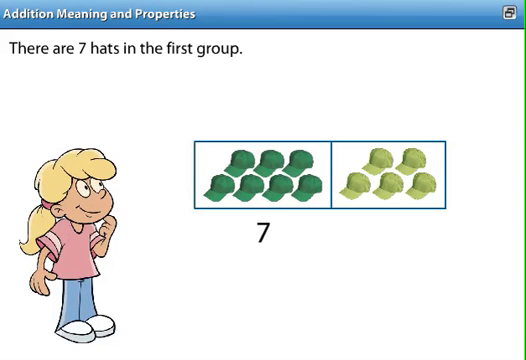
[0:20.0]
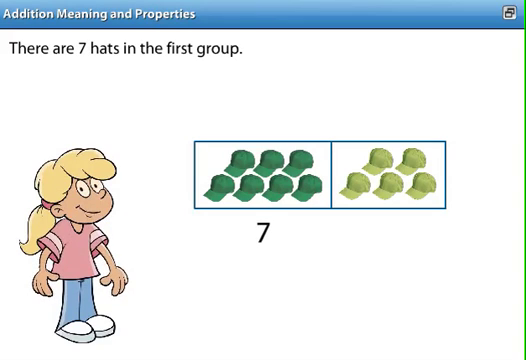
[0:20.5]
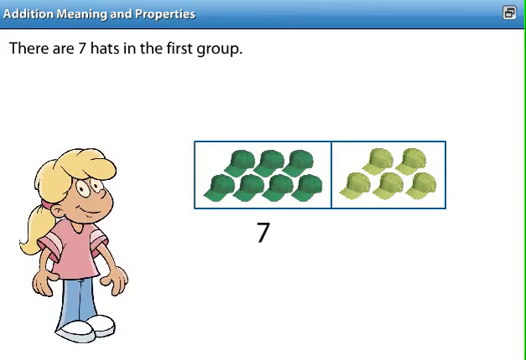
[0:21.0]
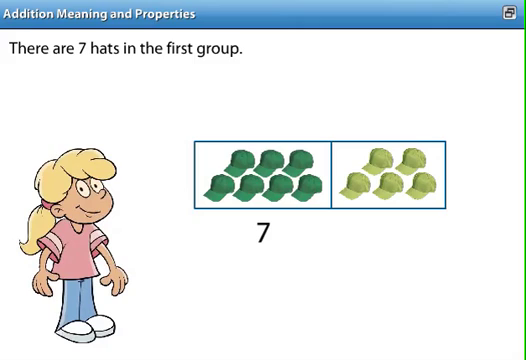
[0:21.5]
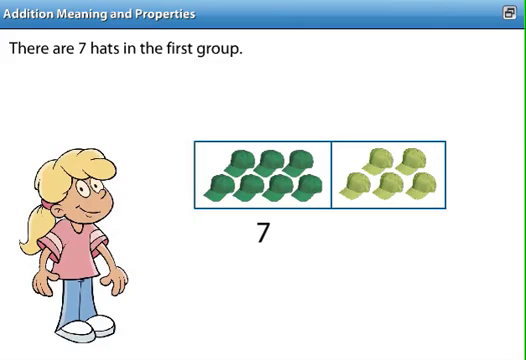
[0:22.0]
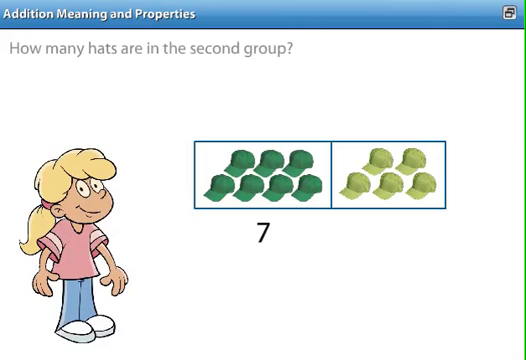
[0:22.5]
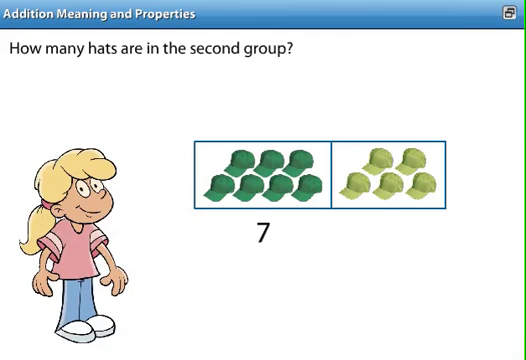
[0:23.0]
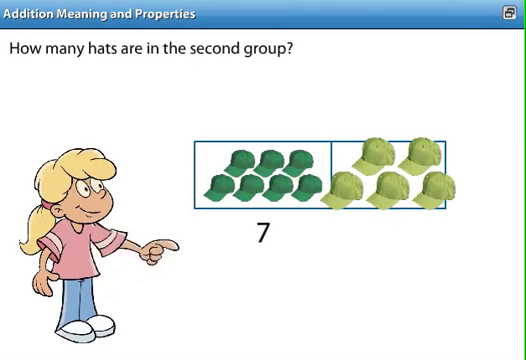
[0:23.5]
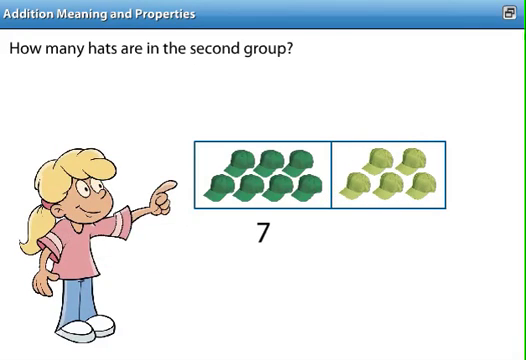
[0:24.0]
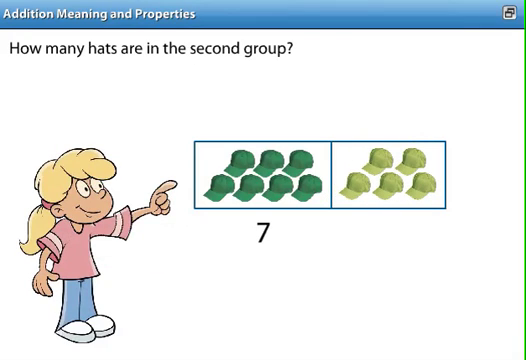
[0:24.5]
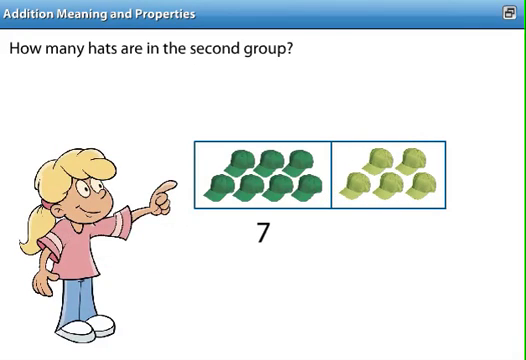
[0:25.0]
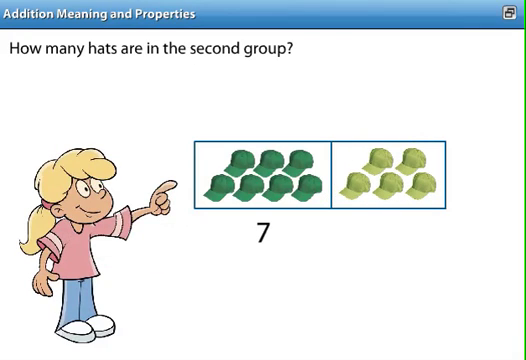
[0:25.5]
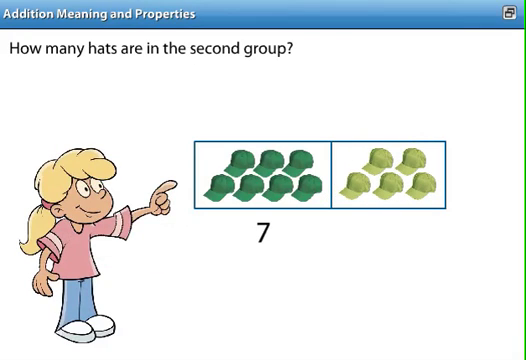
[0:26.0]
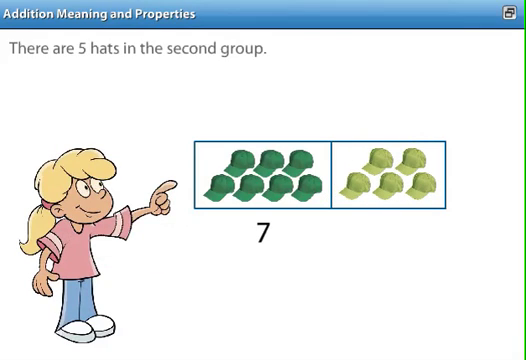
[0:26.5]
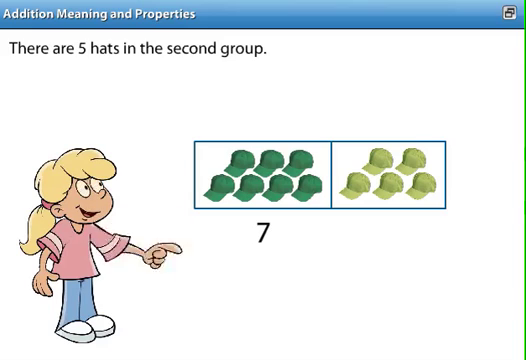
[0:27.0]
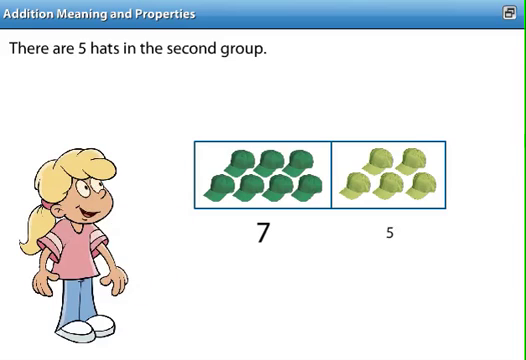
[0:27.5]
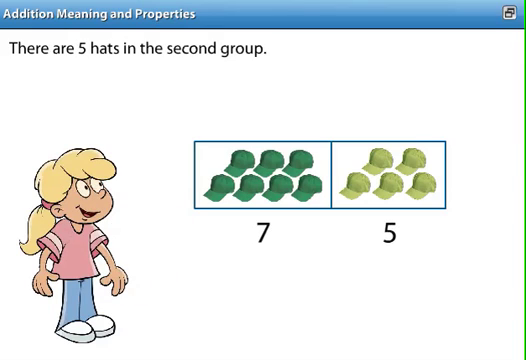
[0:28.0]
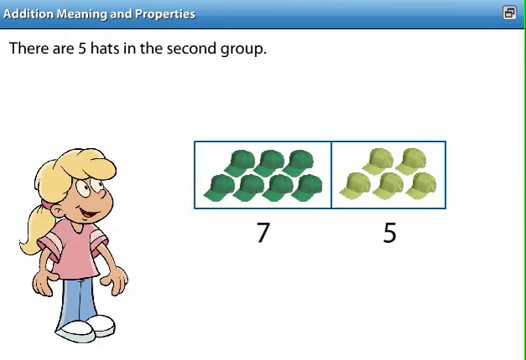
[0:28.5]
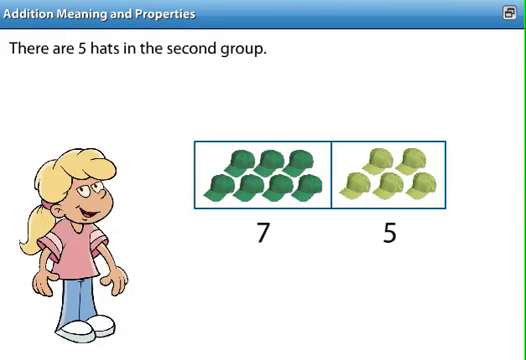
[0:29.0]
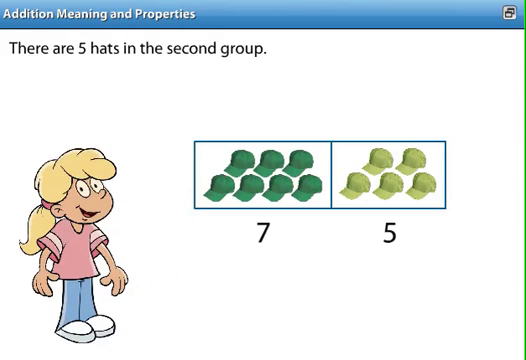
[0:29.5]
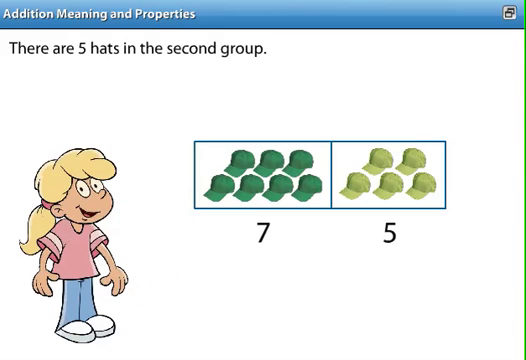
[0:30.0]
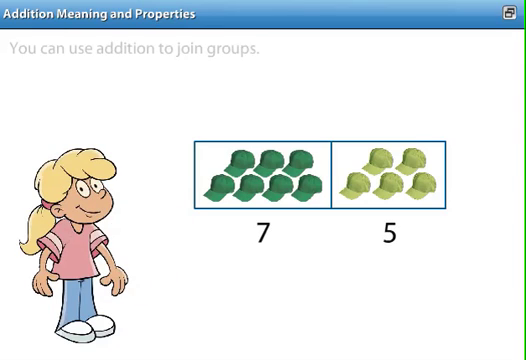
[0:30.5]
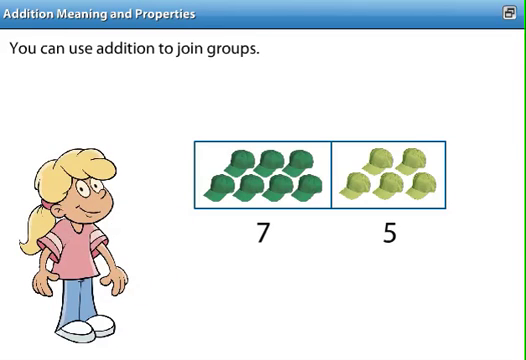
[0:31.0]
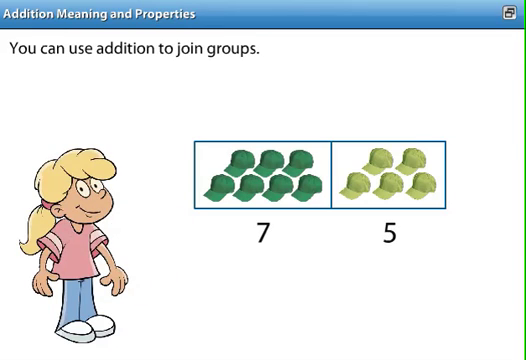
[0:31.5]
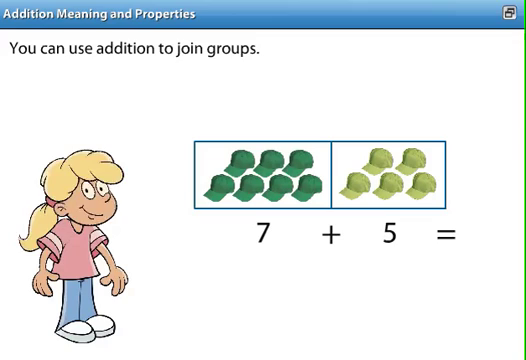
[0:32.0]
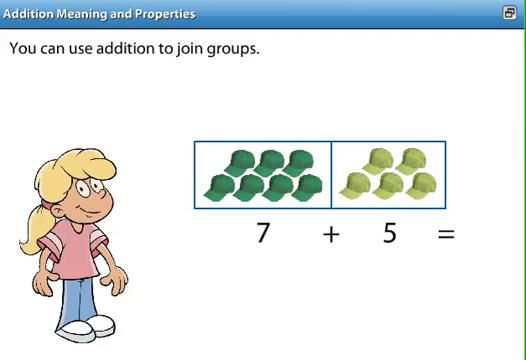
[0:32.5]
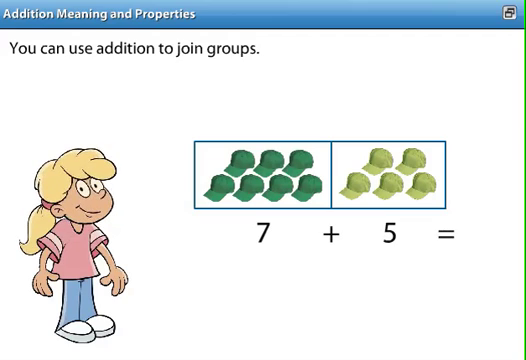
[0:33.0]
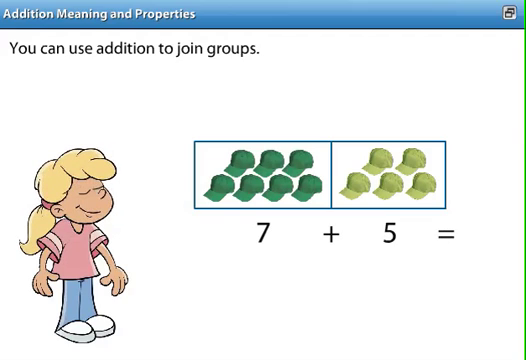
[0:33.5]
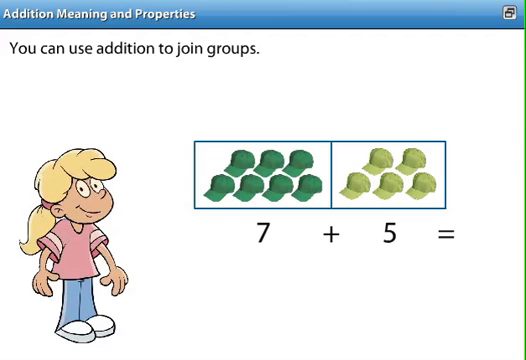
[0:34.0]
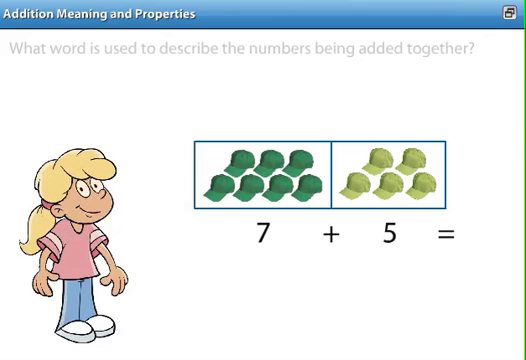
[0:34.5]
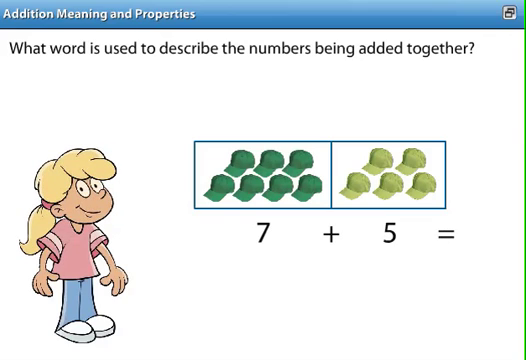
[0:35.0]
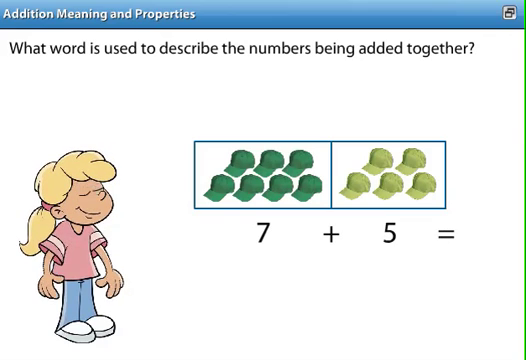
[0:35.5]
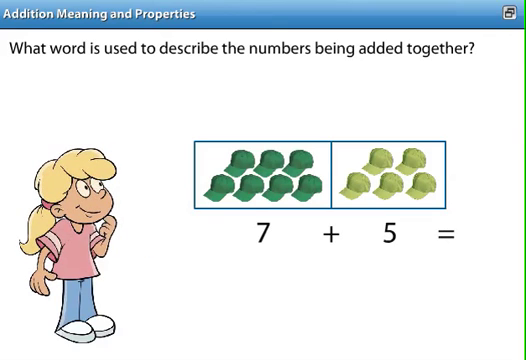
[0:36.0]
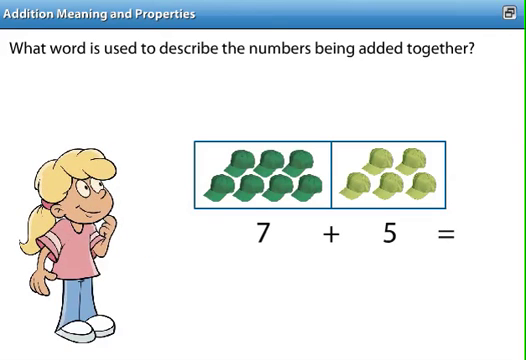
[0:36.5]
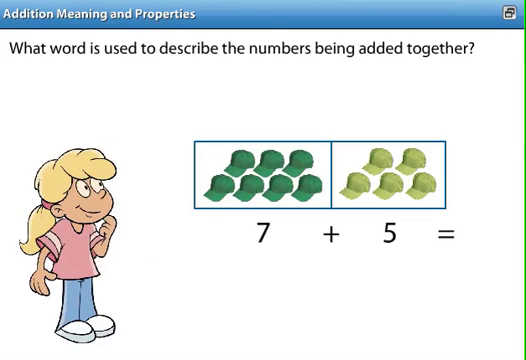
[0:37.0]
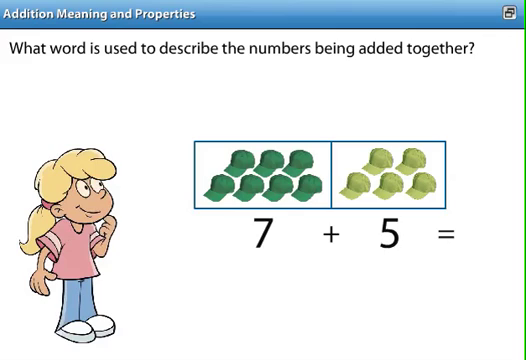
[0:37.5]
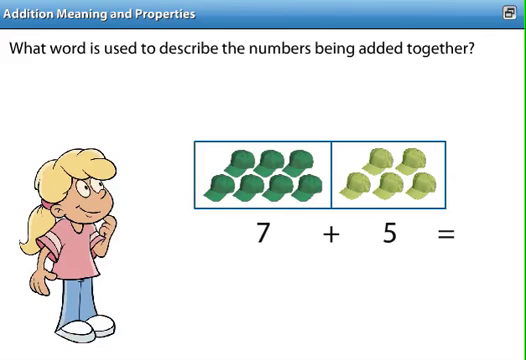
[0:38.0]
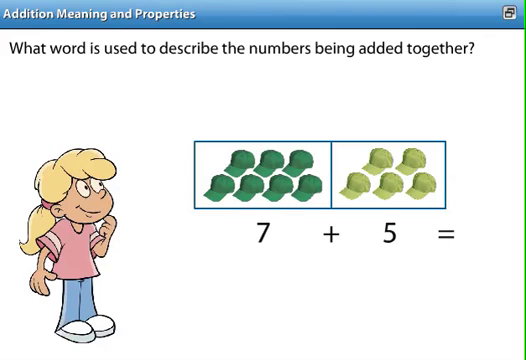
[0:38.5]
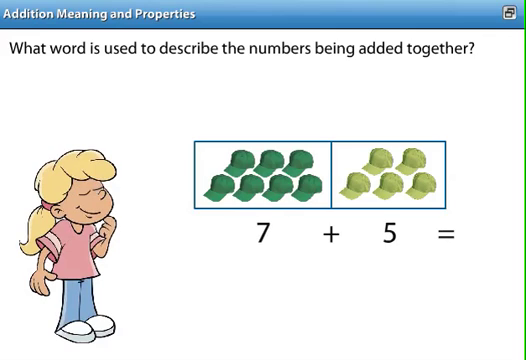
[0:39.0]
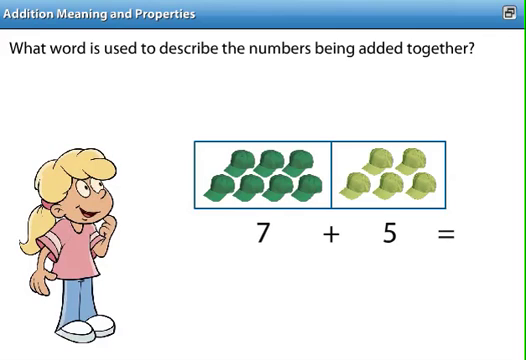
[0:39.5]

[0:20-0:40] With the number 7 underneath the left rectangle of seven green hats, the question at the top changes to "how many hats are in the second group," and the yellow hats in the right-hand rectangle pop out to attract attention. The cartoonish female figure points to the hats, the answer is given above, and a five appears underneath the hats. The figure smiles. The sentence at the top changes to "you can use addition to join groups," and the character shakes her head in affirmation. Below the rectangles, an addition symbol appears between the seven and the five, with an equal sign to their right. The question at the top then changes to "what word is used to describe the numbers being added together?" and the figure is again thinking with her hand on her chin.